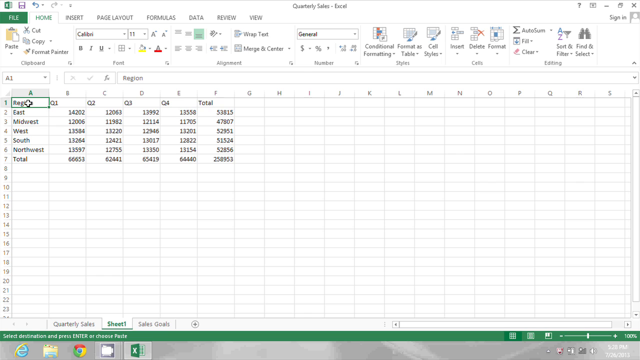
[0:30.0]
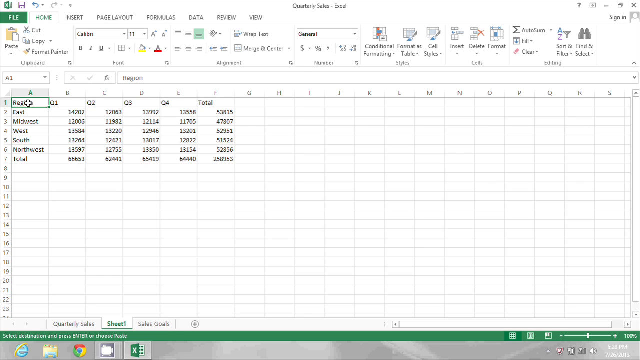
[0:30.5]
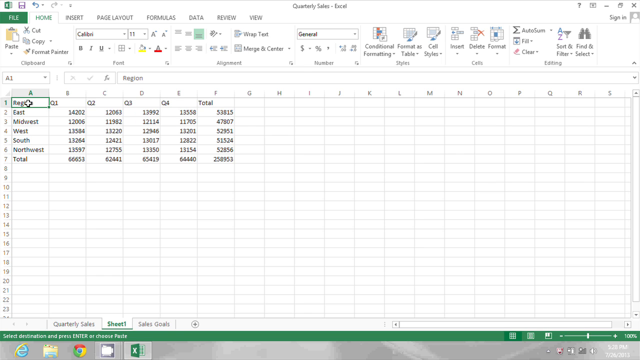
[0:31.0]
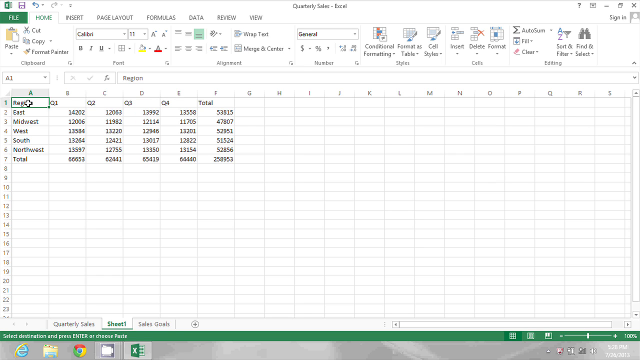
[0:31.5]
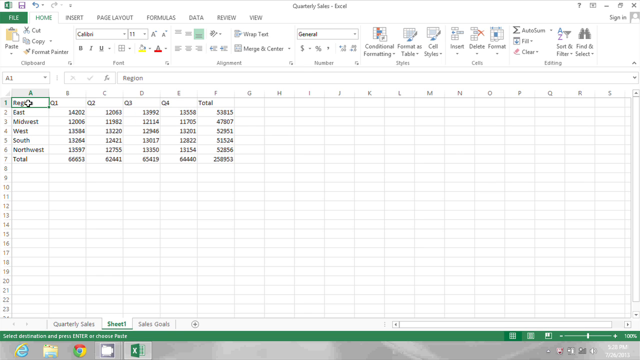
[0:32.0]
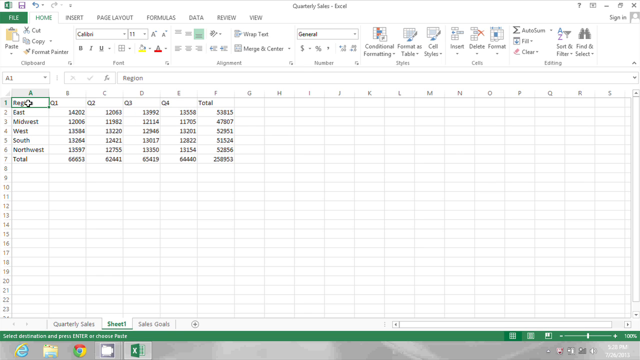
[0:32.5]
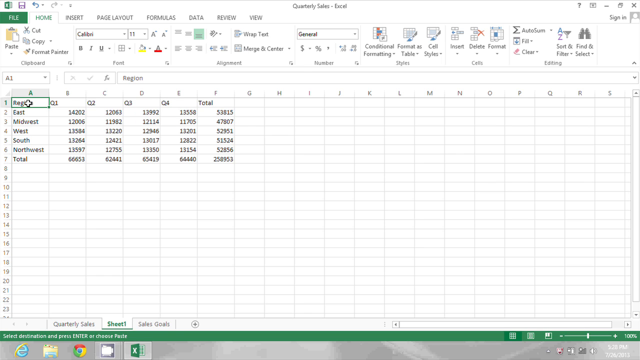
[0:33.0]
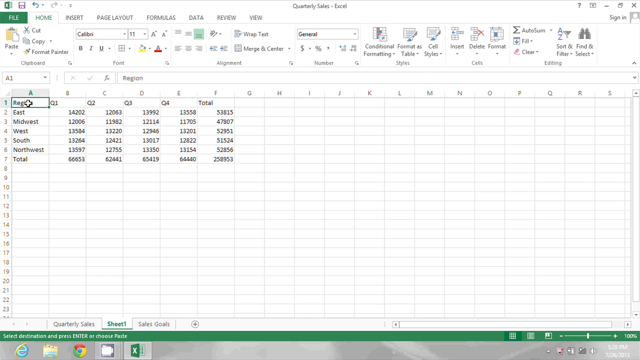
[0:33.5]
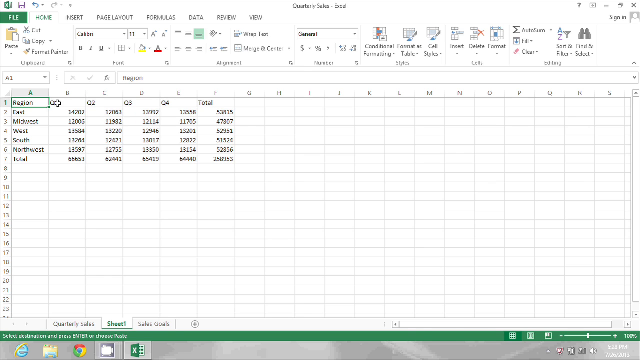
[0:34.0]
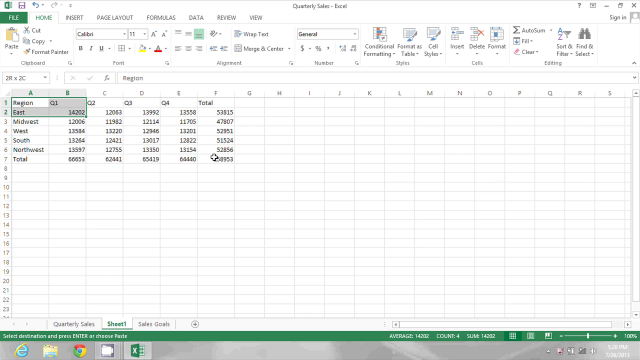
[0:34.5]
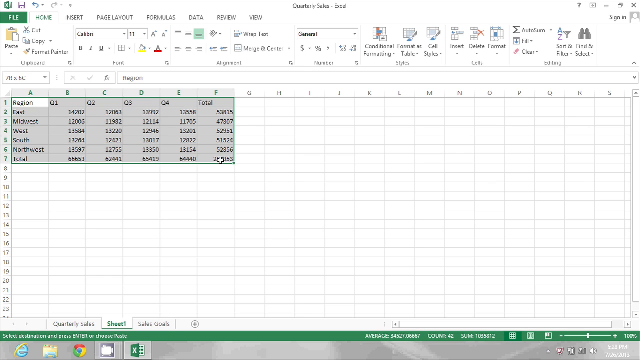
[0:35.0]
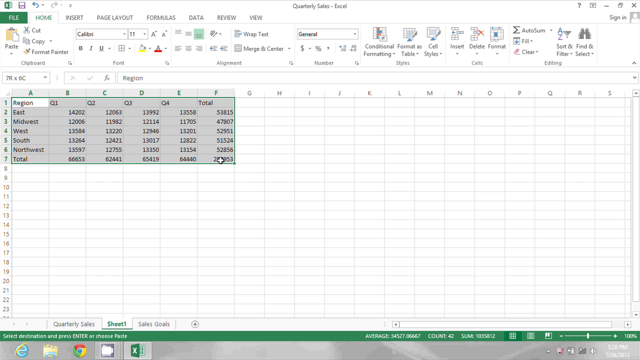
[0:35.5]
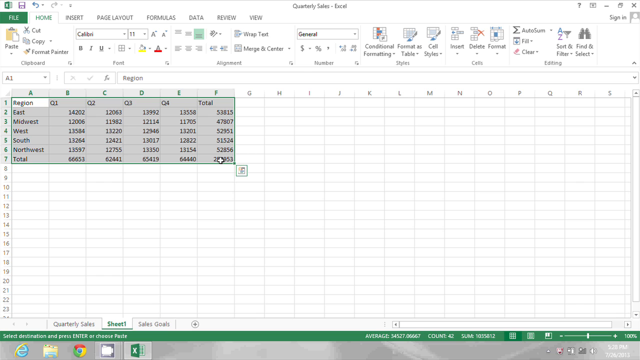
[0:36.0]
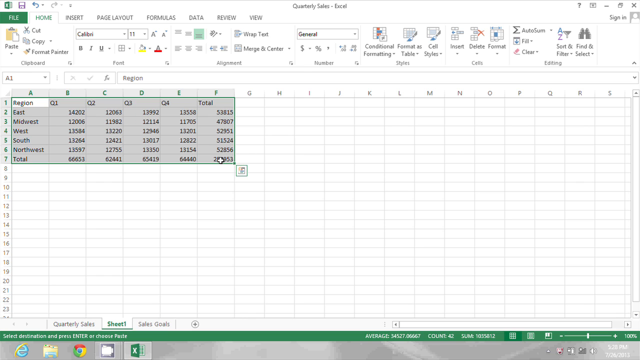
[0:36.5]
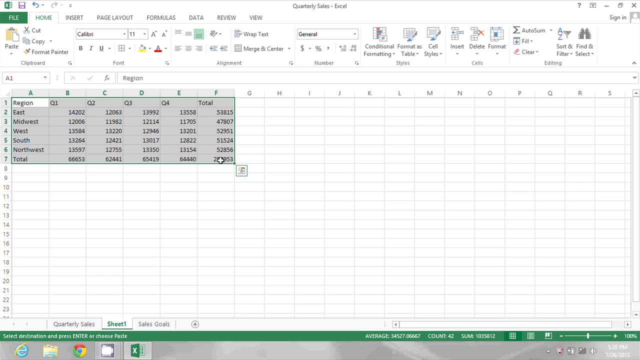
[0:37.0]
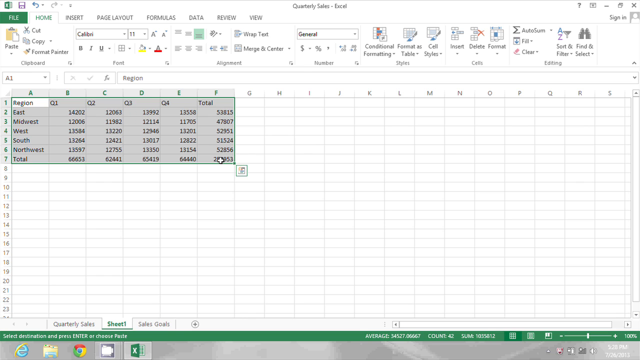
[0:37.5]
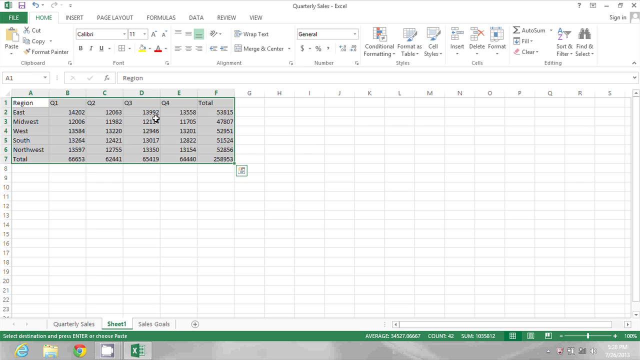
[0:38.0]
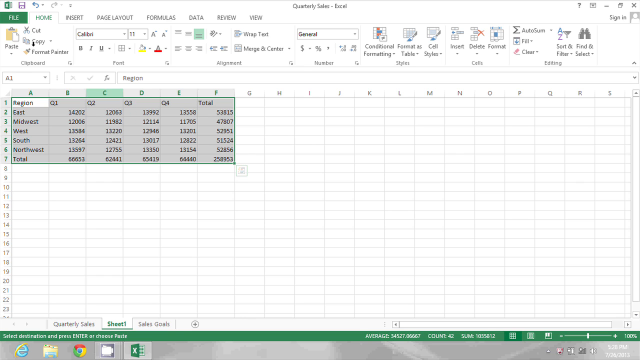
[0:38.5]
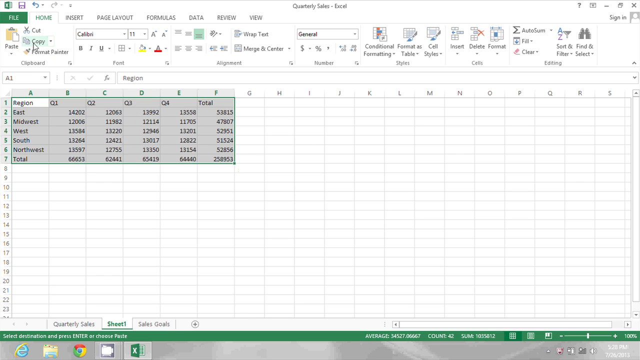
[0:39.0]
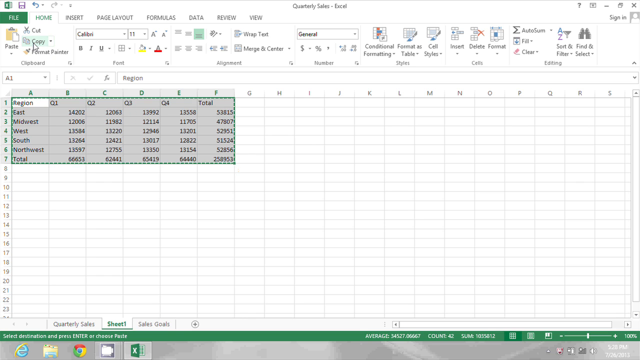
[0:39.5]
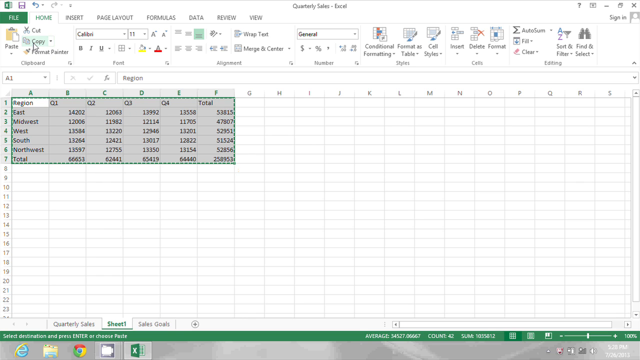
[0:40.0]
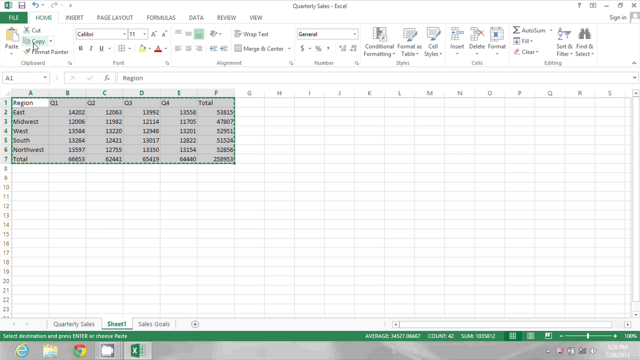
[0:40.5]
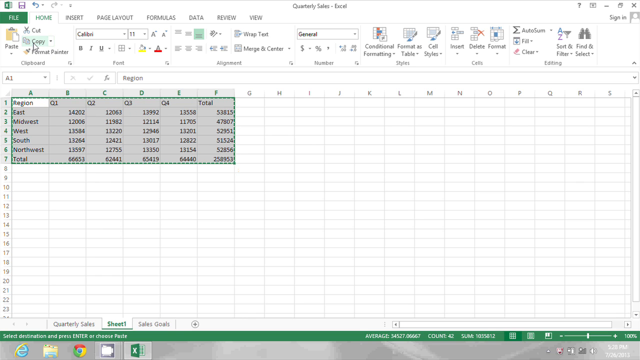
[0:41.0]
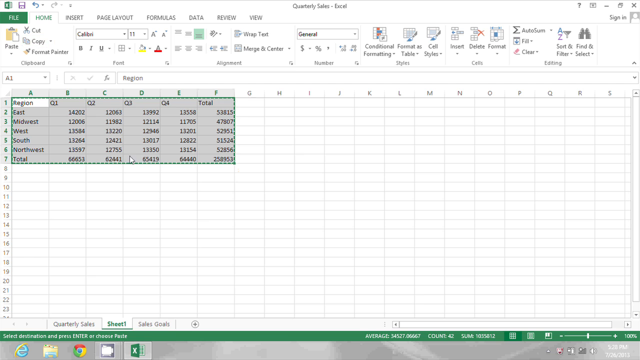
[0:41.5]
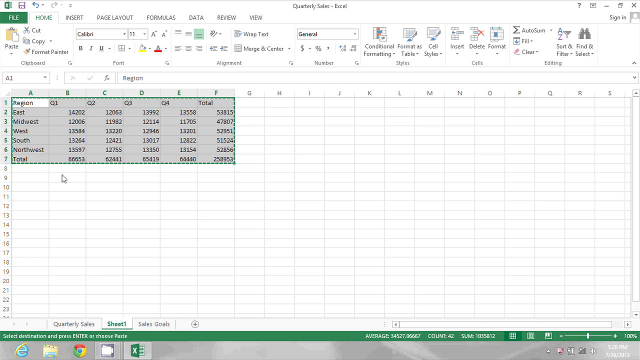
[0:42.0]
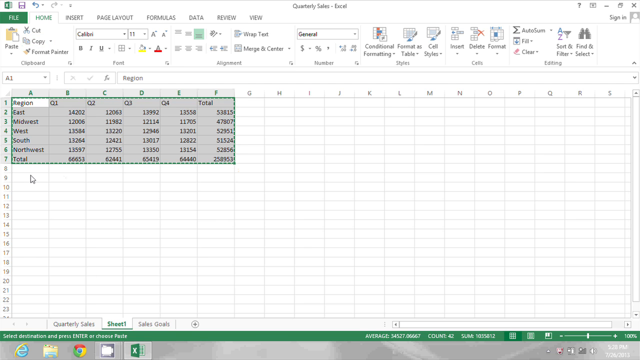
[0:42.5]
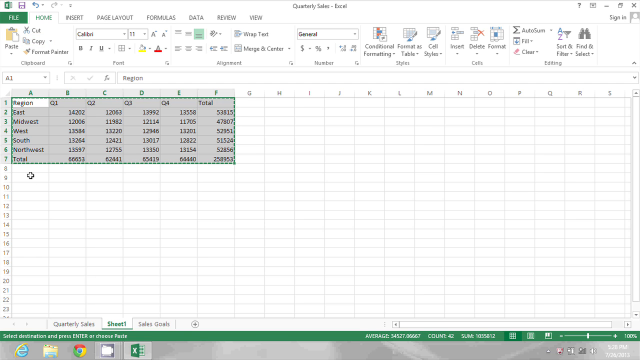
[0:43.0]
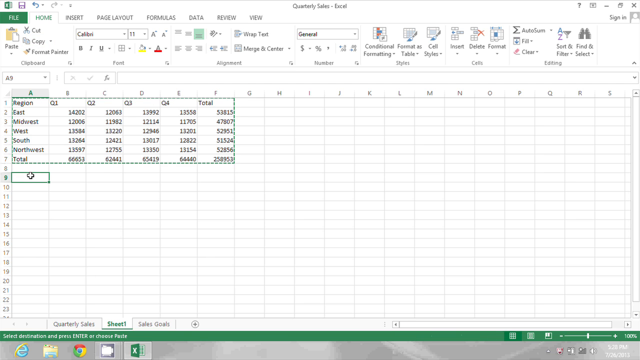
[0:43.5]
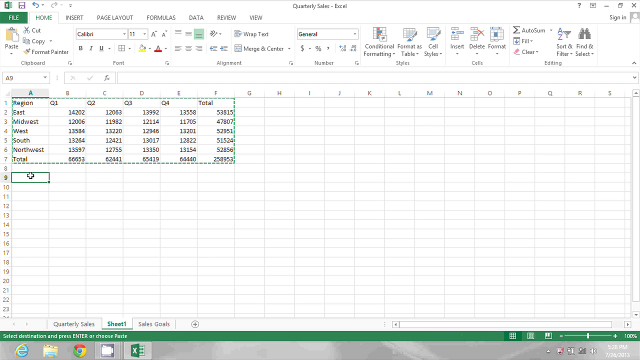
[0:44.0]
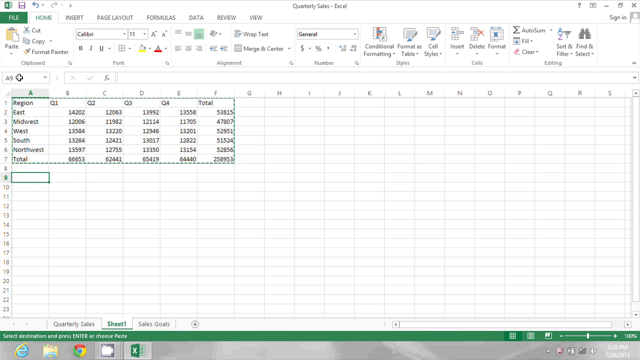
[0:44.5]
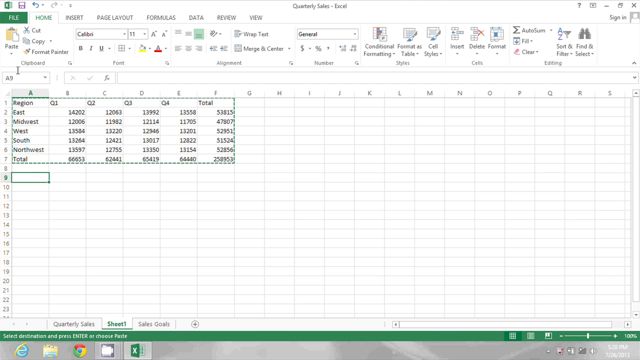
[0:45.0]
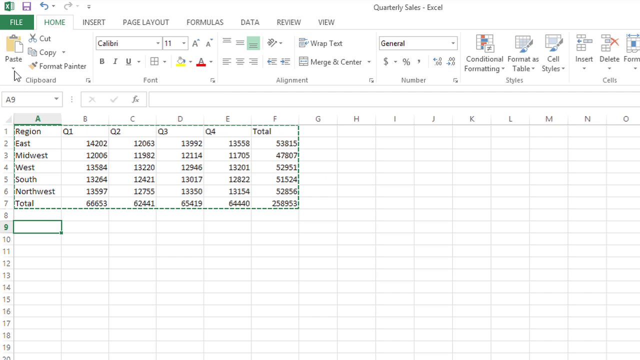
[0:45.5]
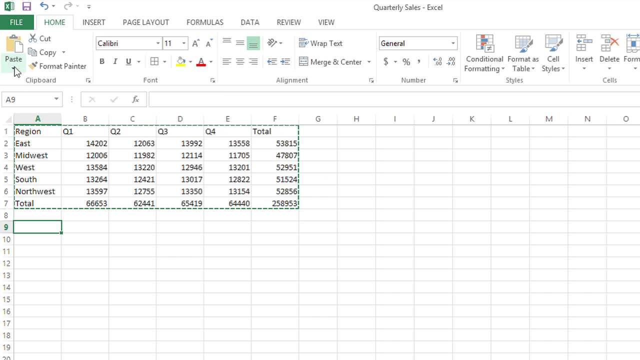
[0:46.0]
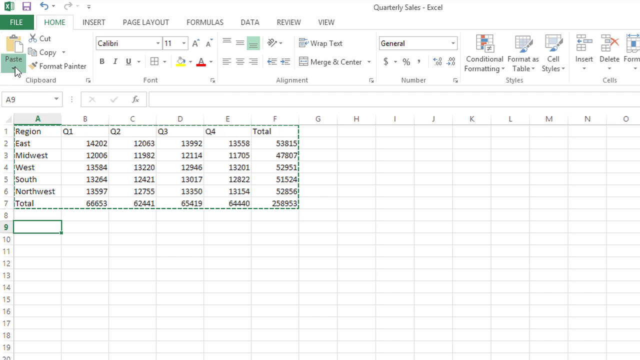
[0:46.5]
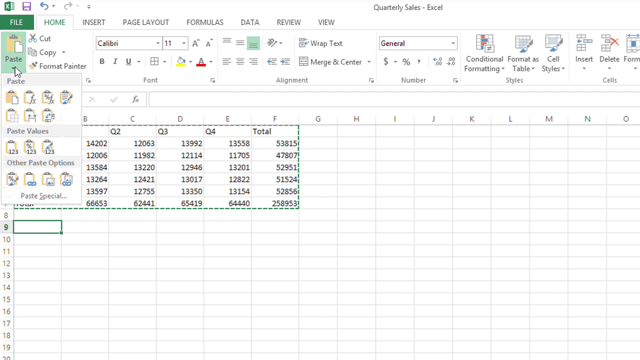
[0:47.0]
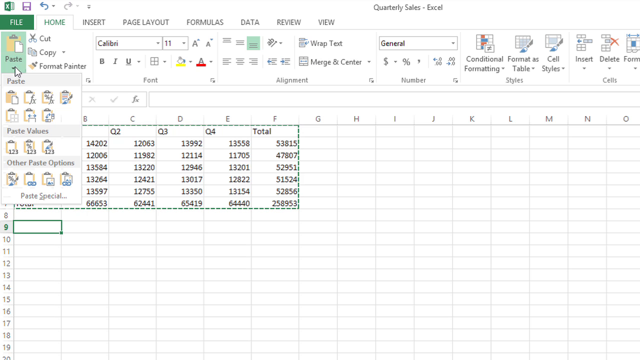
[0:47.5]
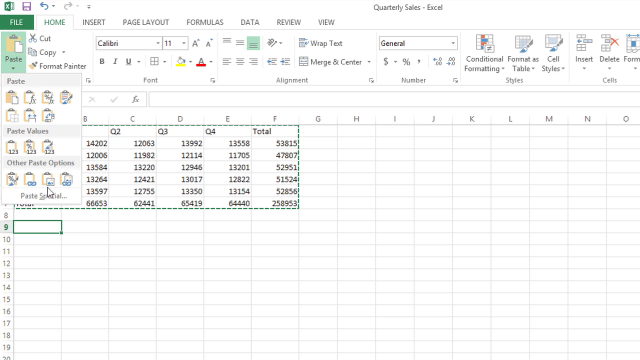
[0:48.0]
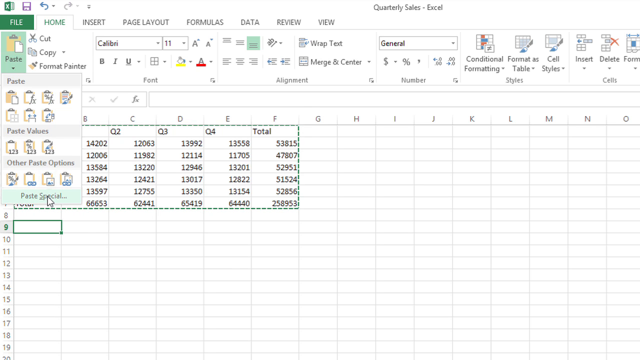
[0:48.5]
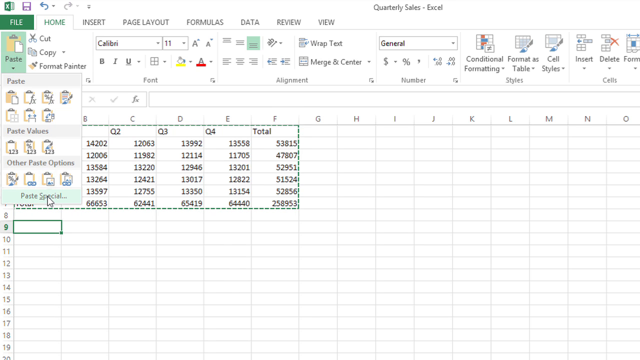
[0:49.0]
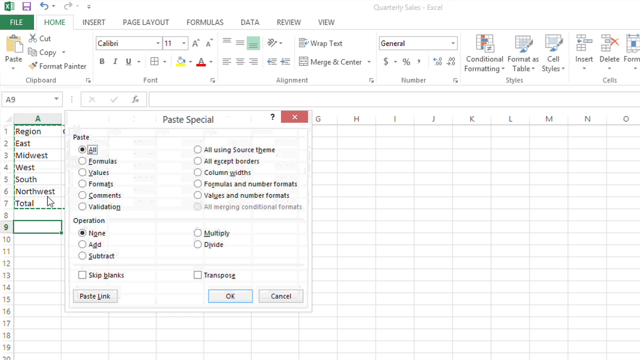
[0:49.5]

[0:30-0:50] An Excel spreadsheet is on the screen with "quarterly sales" at the top. It shows different regions, East, Midwest, West, South and Northwest, and rows for quarter one, quarter two, quarter three and quarter four, with totals at the end. The mouse stays over the region section before highlighting all of the text and all of the parts of the spreadsheet. It then clicks copy, goes down below the table to line nine, and the screen zooms in a little as the mouse goes over to paste. The last element clicked is an option called "paste special", the very last option on the pop-up.